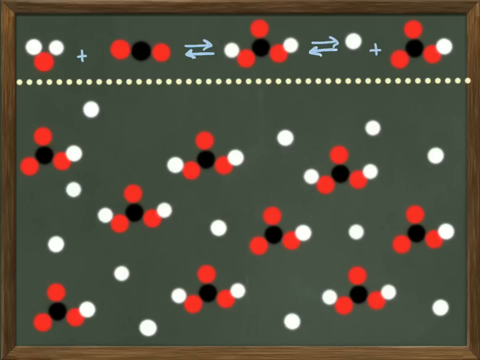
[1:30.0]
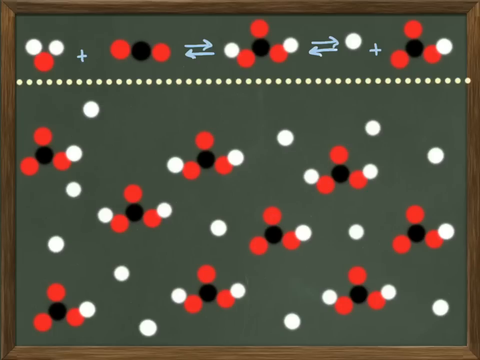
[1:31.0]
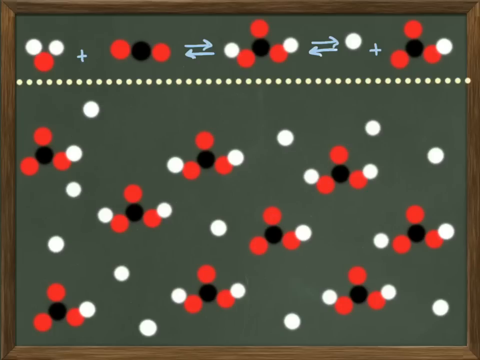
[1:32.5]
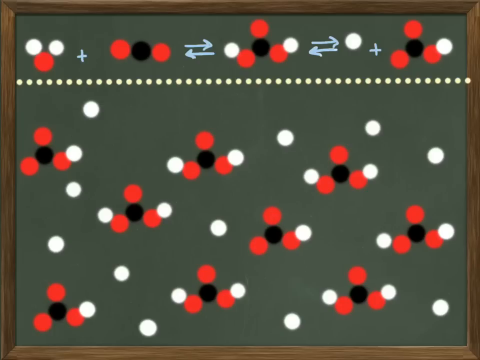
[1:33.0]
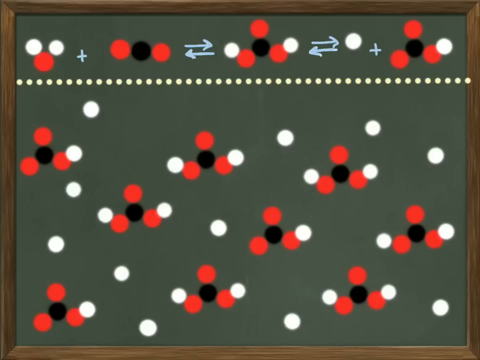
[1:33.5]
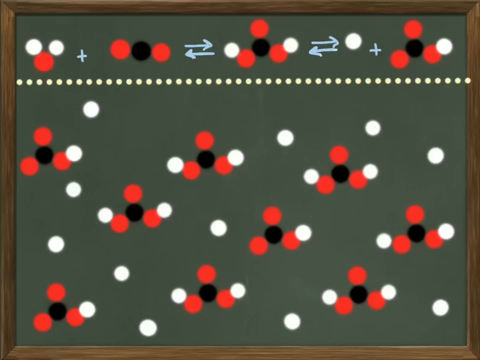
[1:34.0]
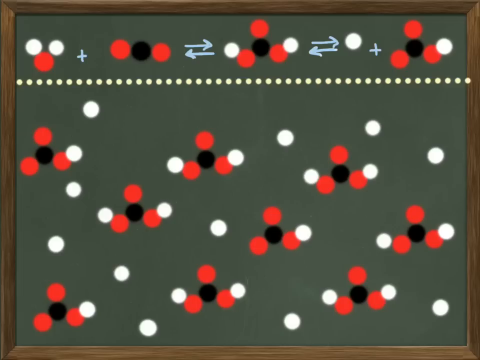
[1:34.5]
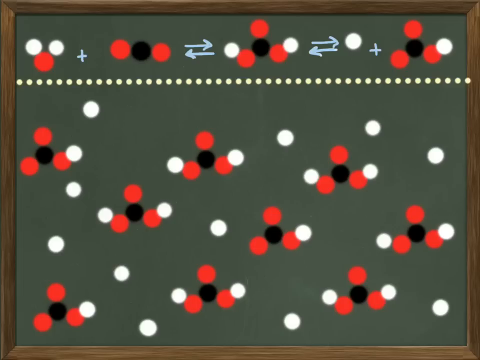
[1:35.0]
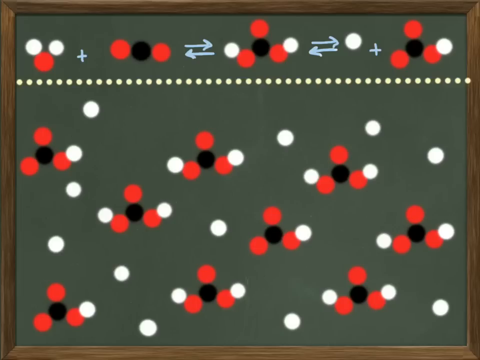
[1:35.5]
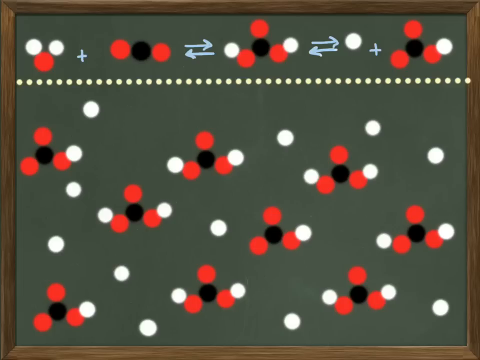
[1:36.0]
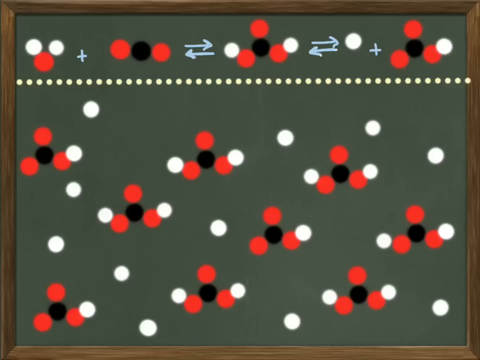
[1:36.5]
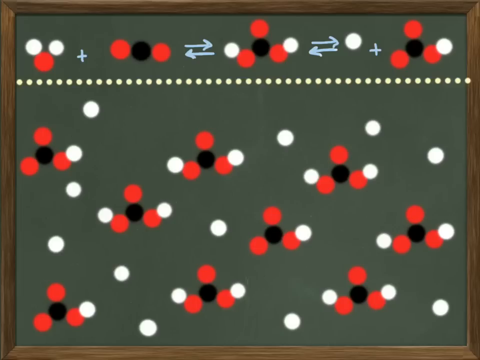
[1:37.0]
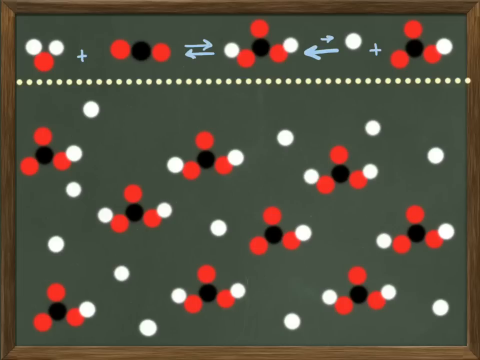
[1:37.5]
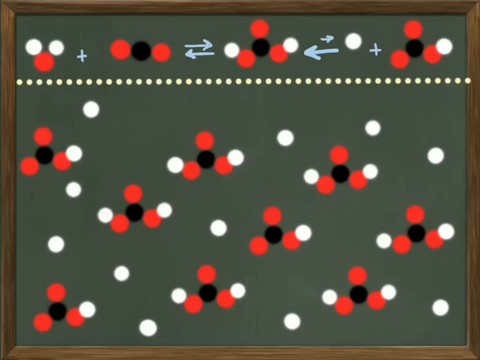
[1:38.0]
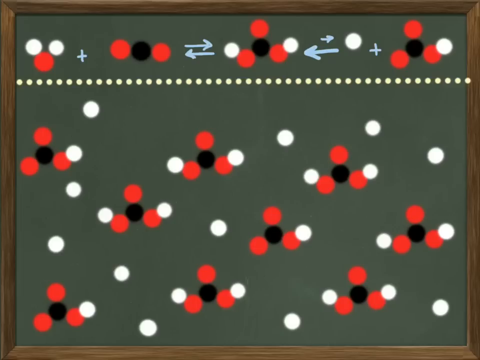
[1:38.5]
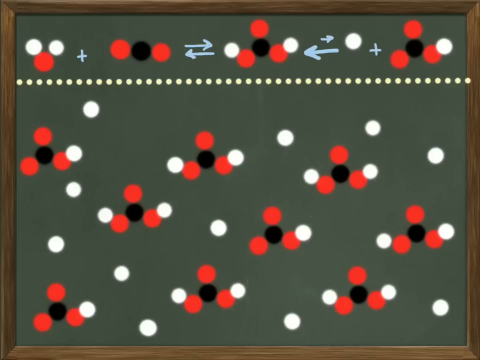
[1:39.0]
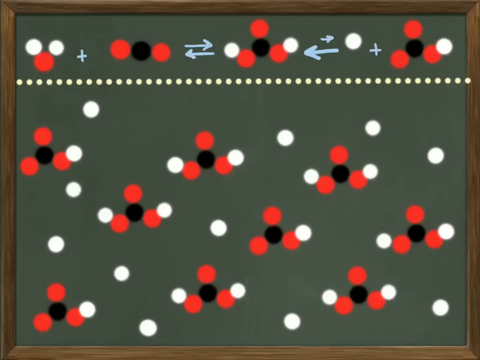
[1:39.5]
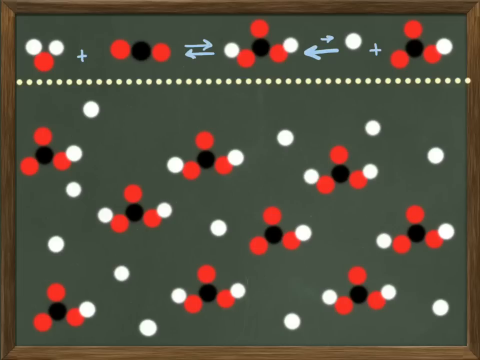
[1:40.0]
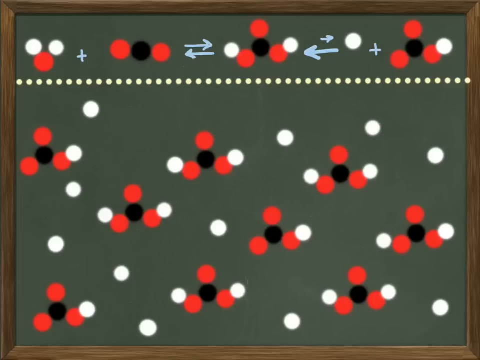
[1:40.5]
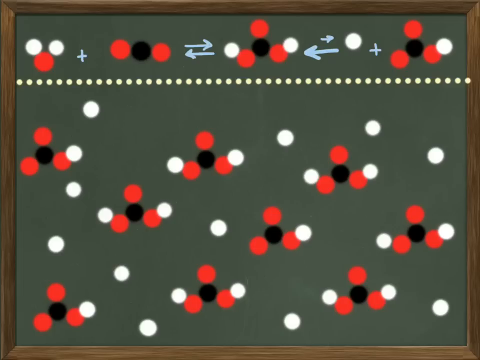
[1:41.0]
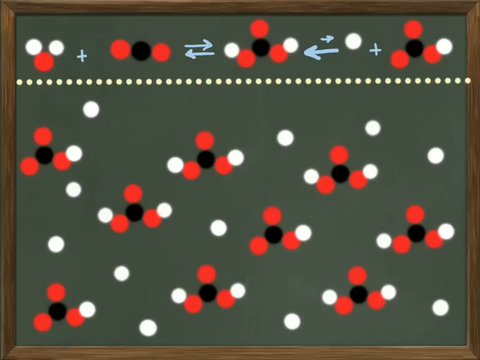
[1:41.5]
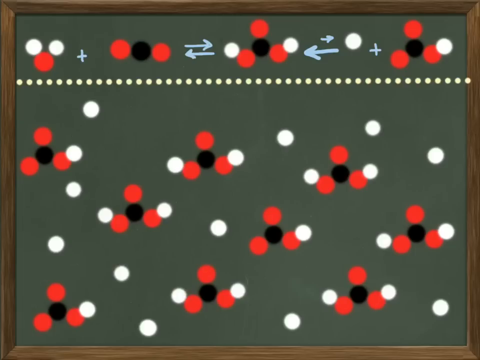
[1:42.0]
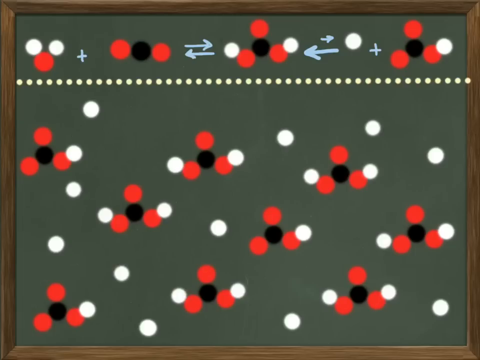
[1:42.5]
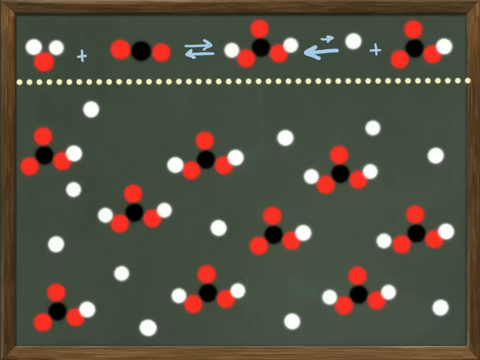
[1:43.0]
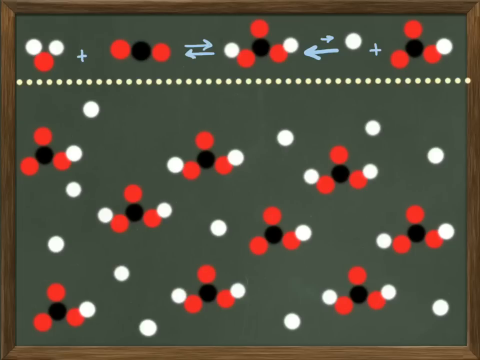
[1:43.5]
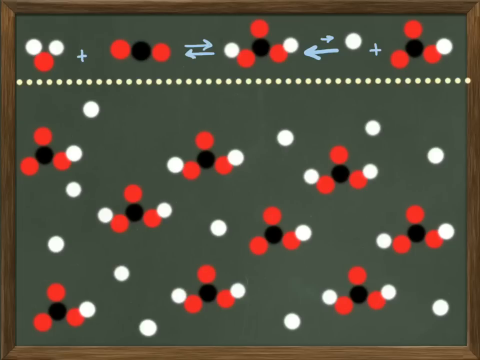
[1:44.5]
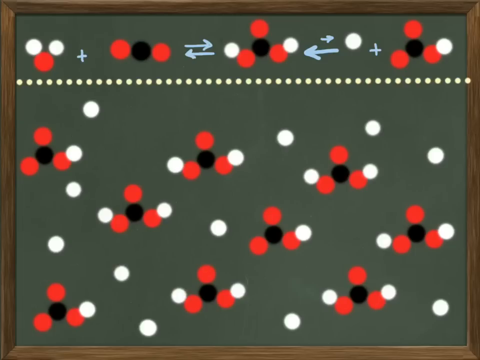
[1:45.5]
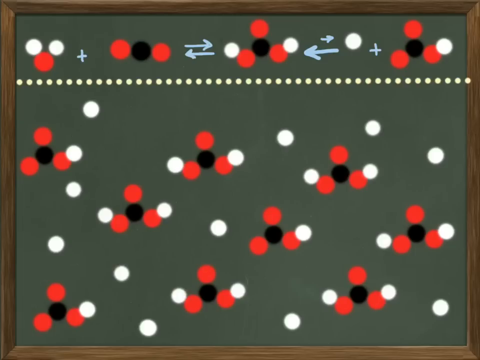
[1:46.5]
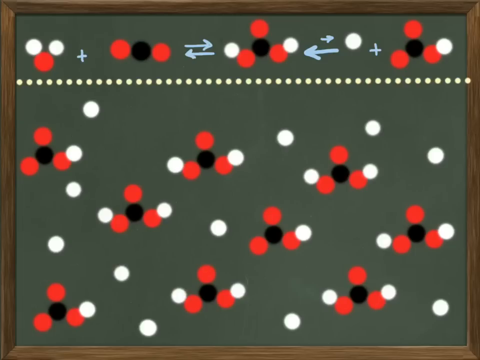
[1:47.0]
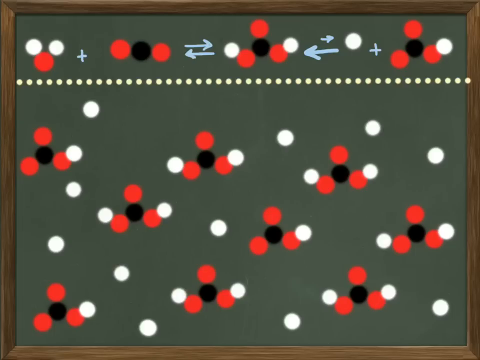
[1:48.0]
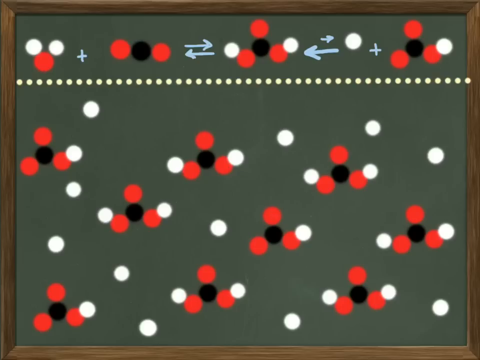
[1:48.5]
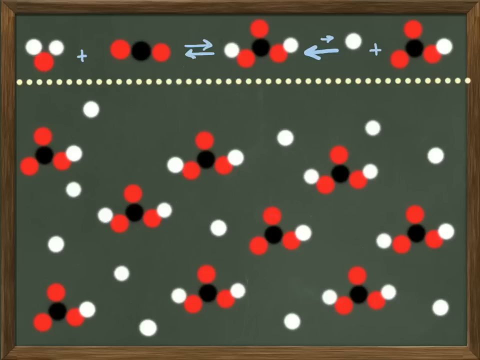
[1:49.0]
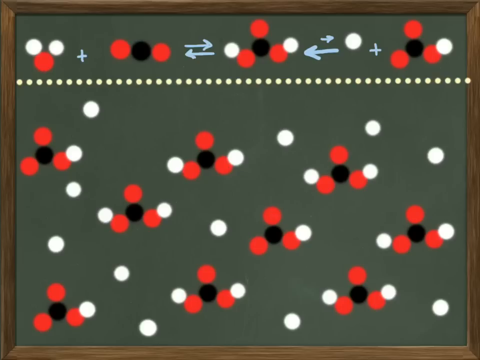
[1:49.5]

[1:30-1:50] The chalkboard is very full, with an equation and a lot of work on it. Bicarbonate equations are visible, and the board is very busy. There appears to be a long equation at the very top. A white circle is moved around from place to place. Everything is on the big chalkboard, and the topic looks like chemistry.